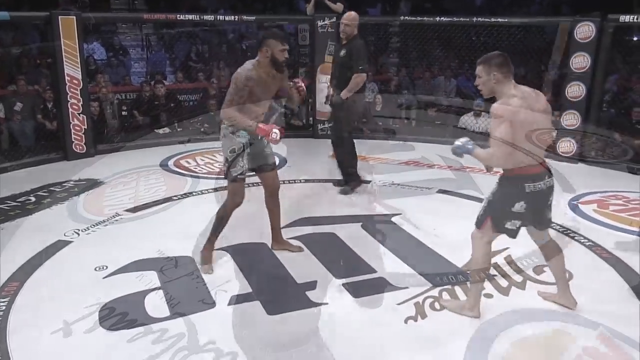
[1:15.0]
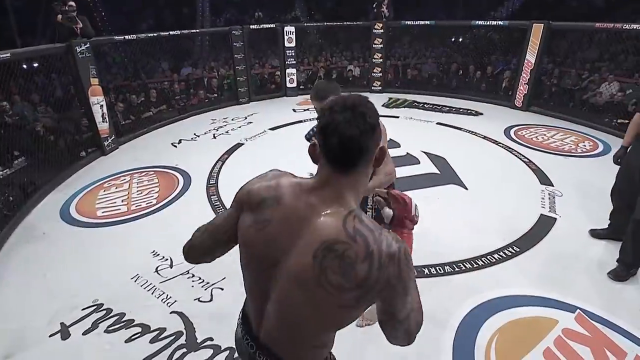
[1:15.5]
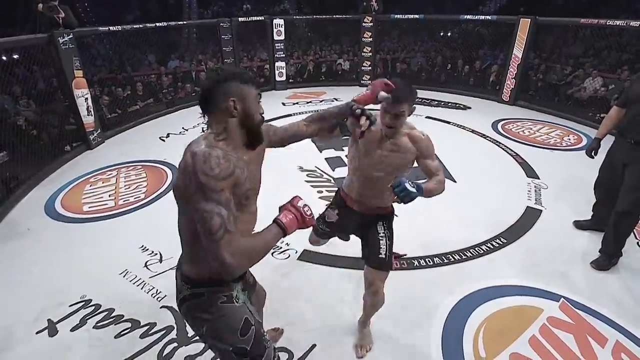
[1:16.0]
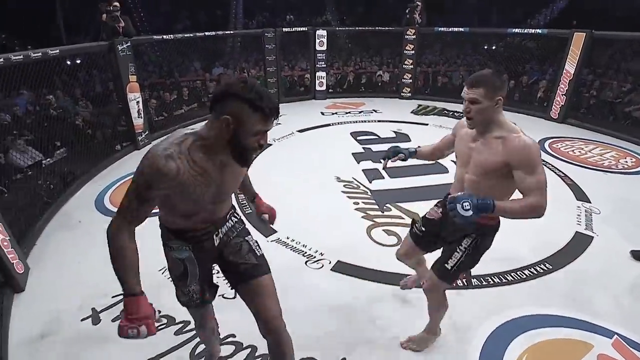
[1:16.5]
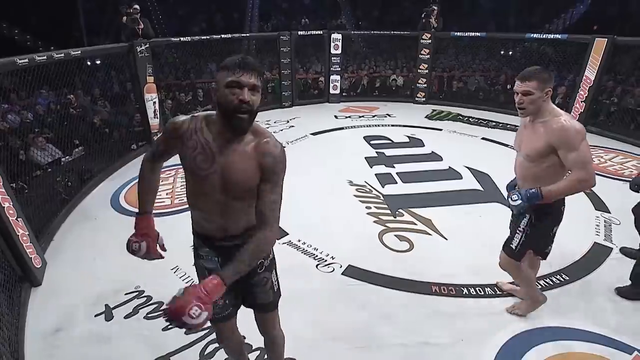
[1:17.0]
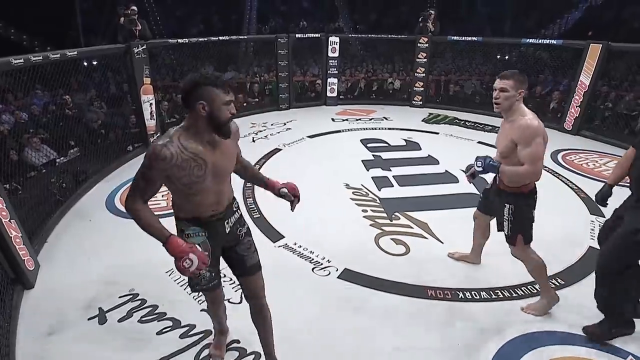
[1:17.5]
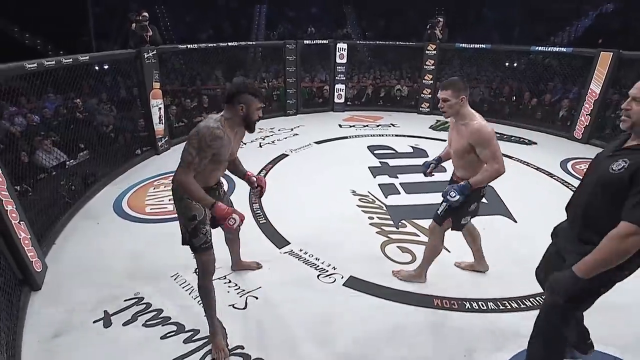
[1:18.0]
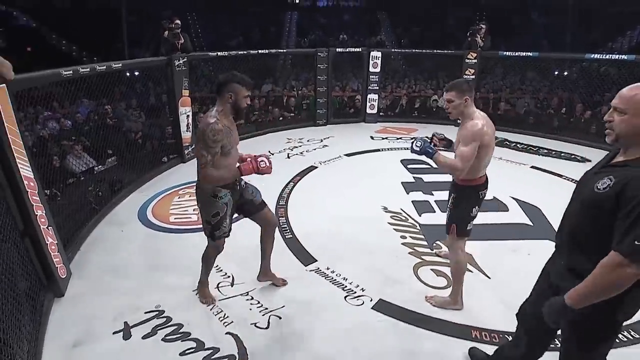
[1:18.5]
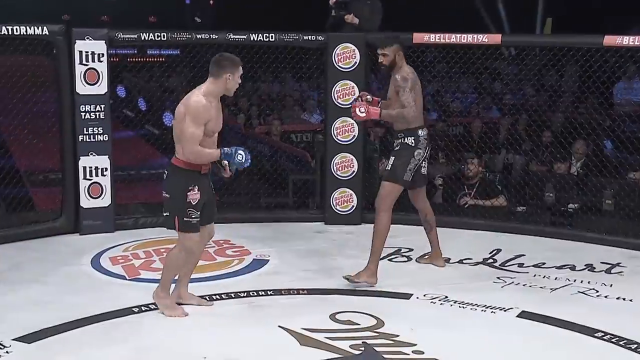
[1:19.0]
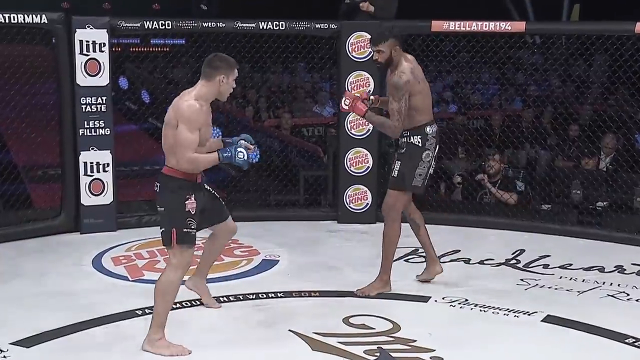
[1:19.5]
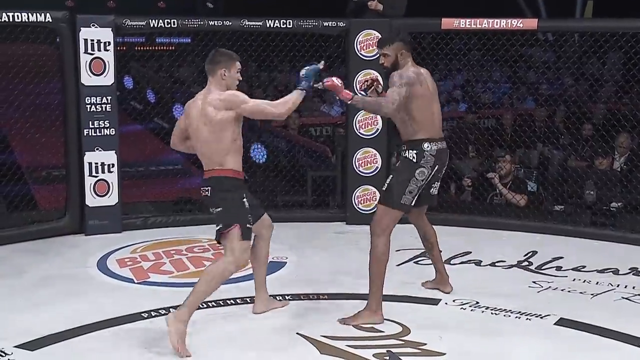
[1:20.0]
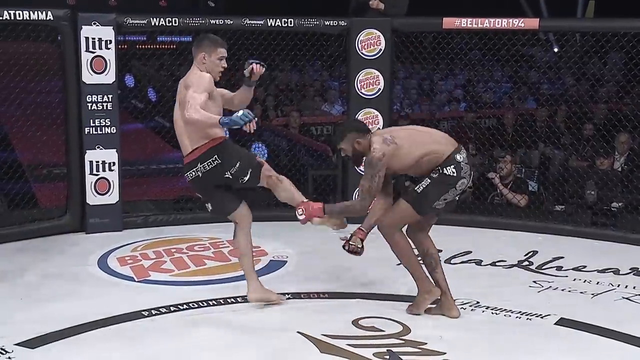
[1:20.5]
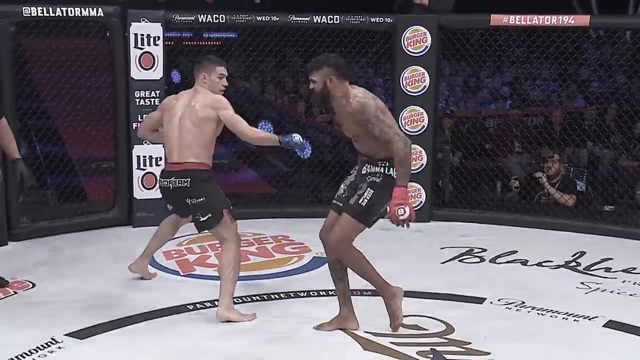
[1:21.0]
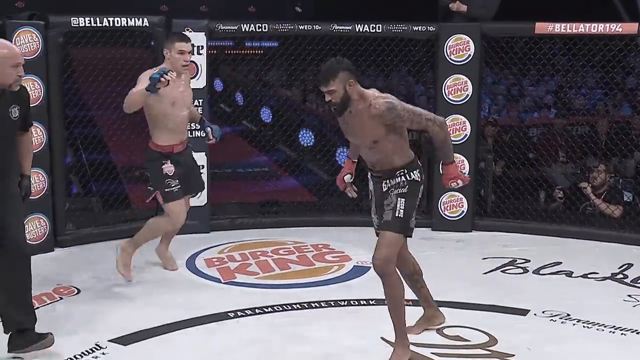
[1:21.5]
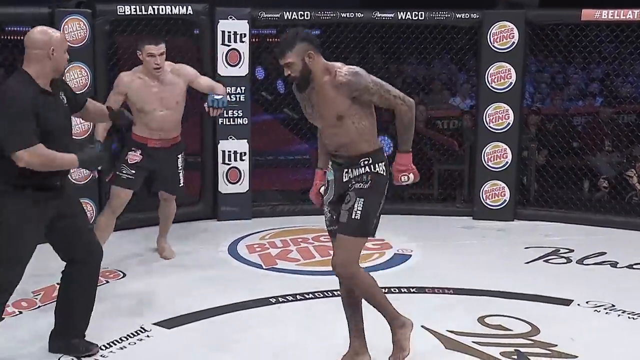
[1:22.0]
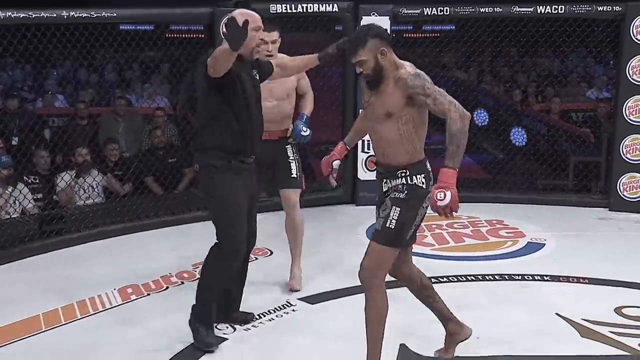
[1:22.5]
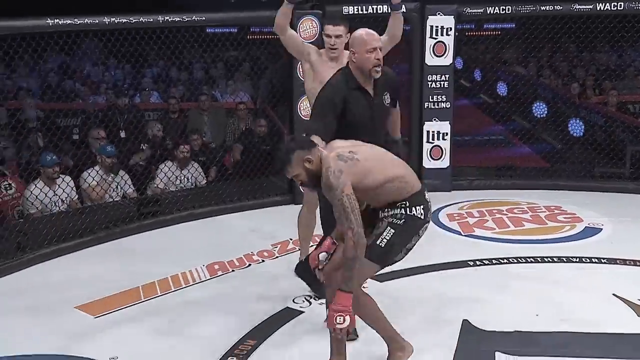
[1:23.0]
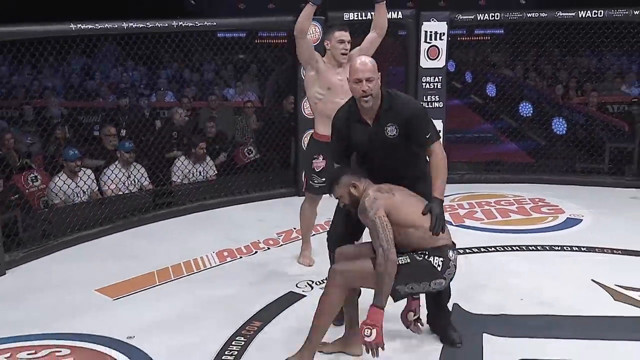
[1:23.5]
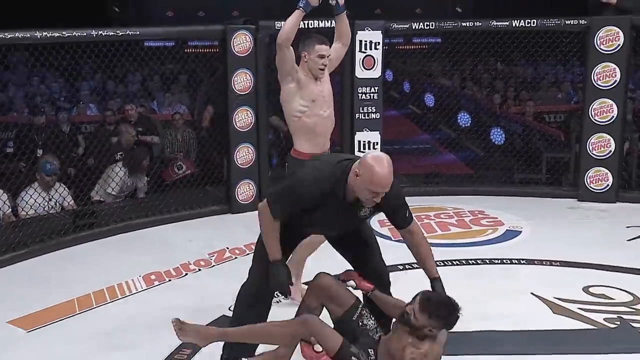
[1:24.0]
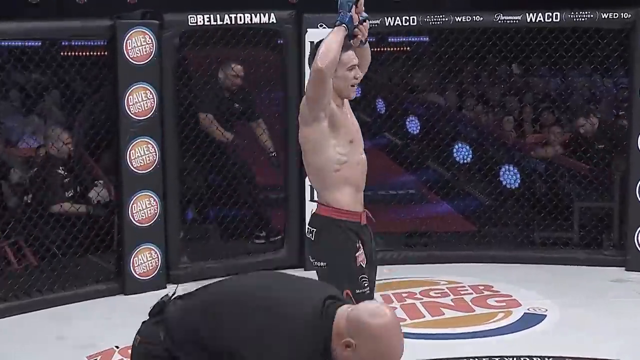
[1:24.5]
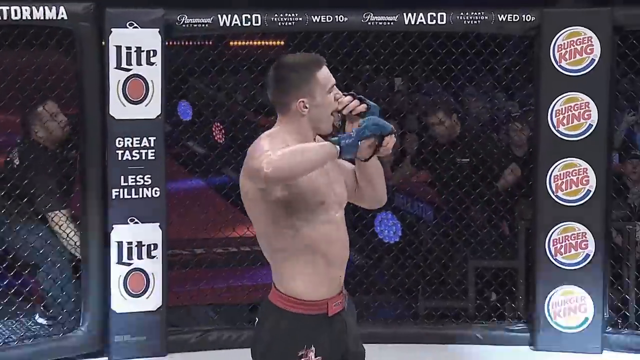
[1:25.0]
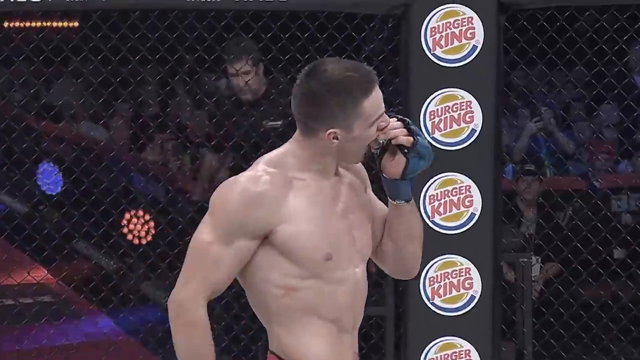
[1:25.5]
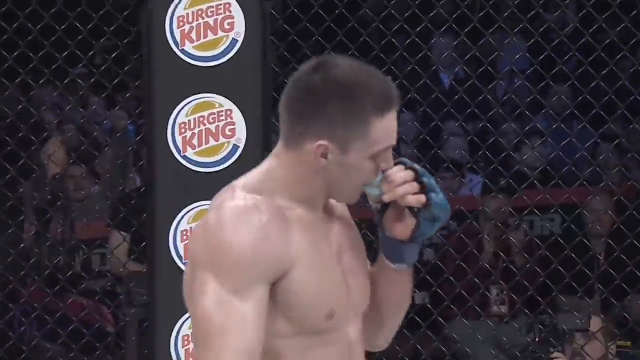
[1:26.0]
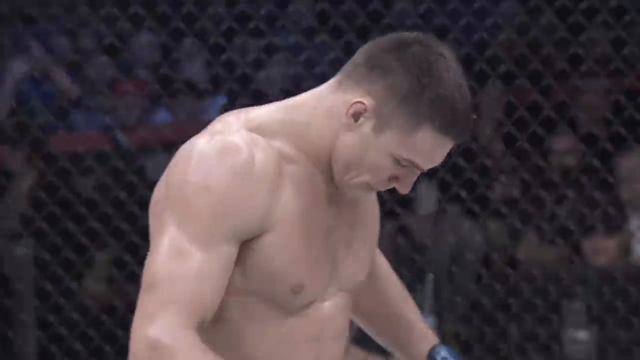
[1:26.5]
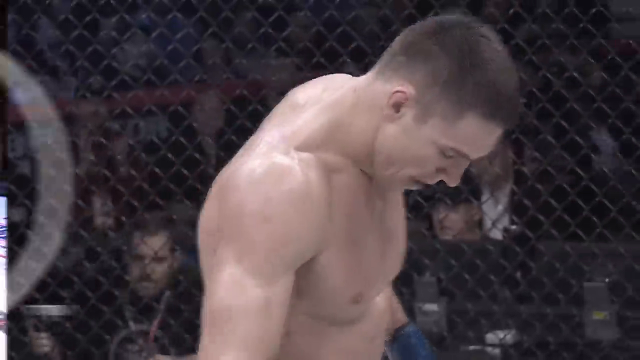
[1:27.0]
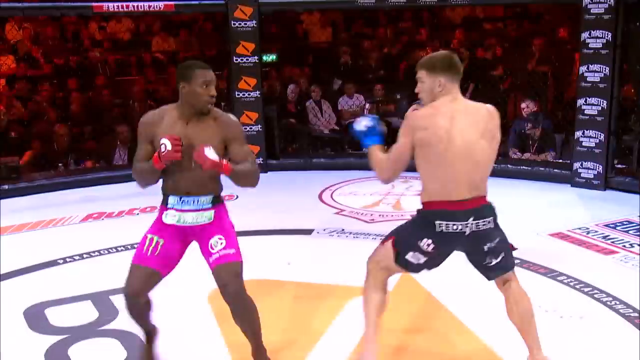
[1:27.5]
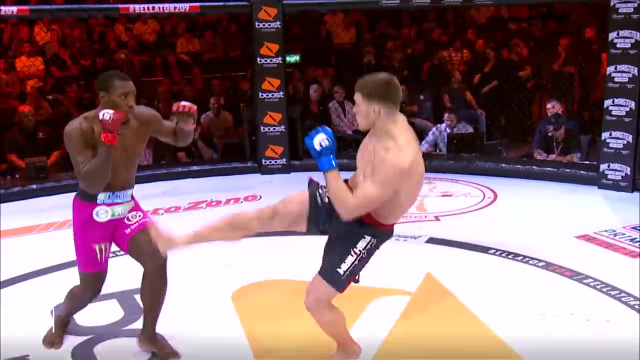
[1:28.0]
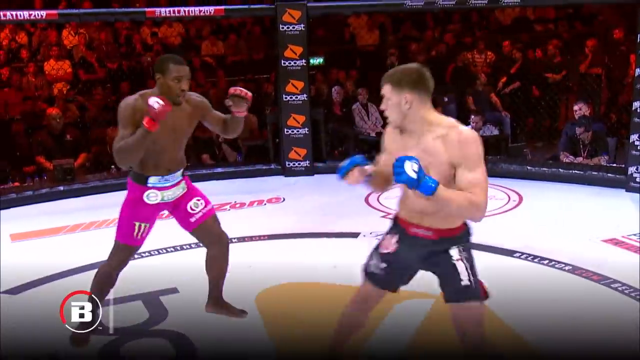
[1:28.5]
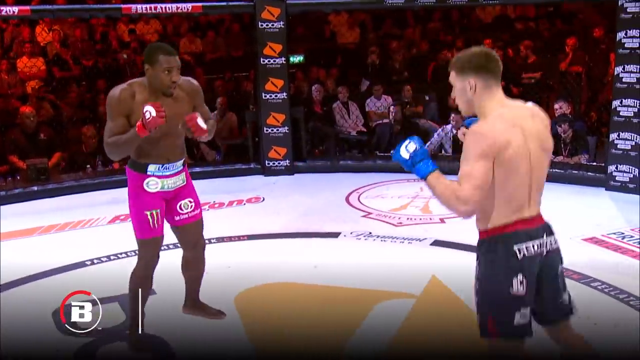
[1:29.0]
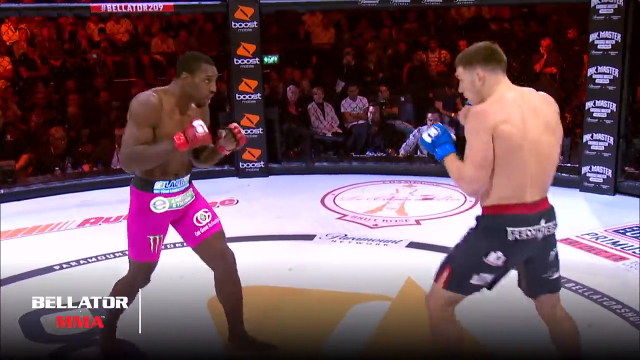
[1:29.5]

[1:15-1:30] McGeary and Nemkov have a short exchange in which Nemkov keeps kicking, and a quick replay goes over the repeated kicks to McGeary's leg; after about the fifth kick McGeary is finished, his knee out of whack. The referee calls the fight and checks a fighter's knee. Burger King and Boost advertisements are visible in the octagon, which looks more like a circular ring than an octagon. The video then moves on to another fight, a large Black man versus Nemkov.